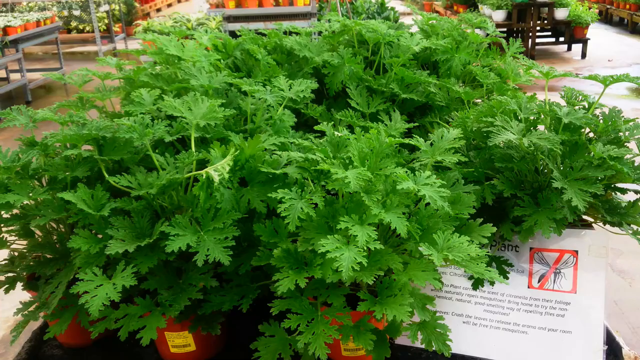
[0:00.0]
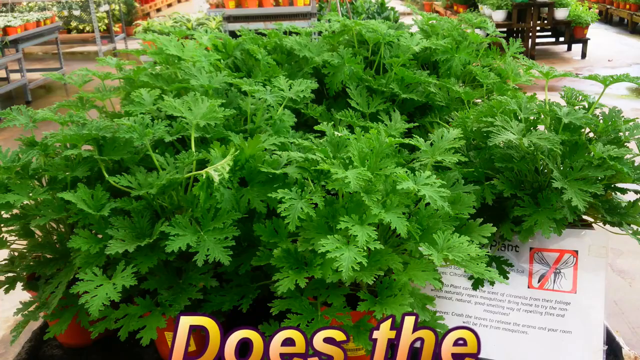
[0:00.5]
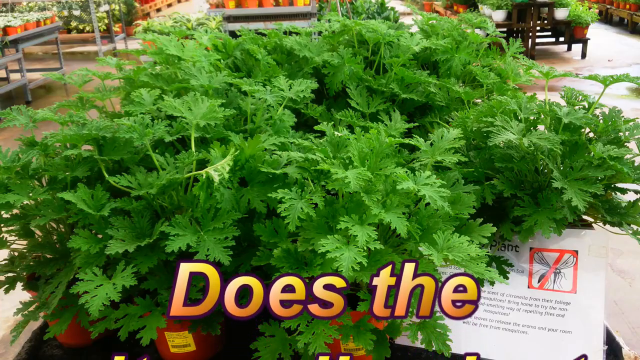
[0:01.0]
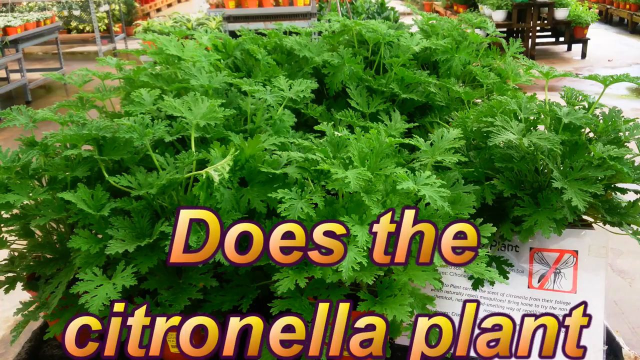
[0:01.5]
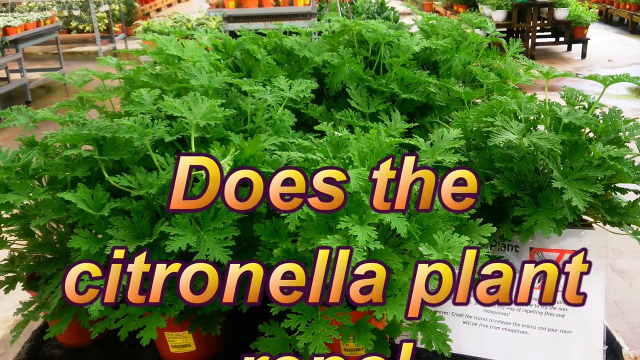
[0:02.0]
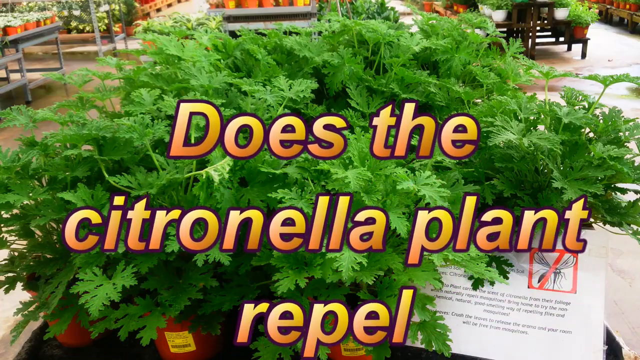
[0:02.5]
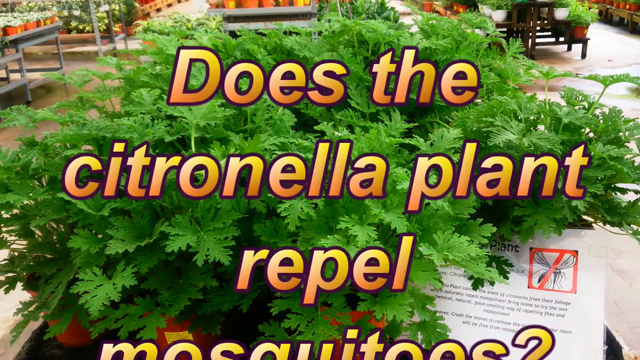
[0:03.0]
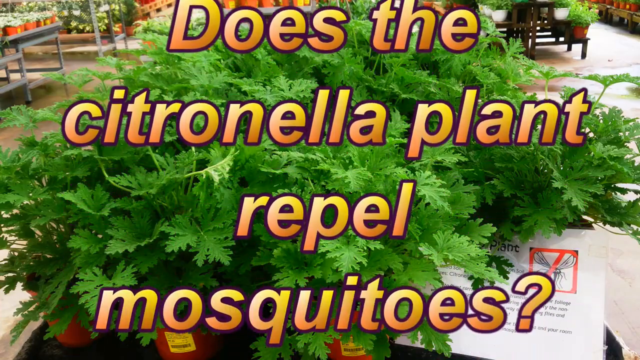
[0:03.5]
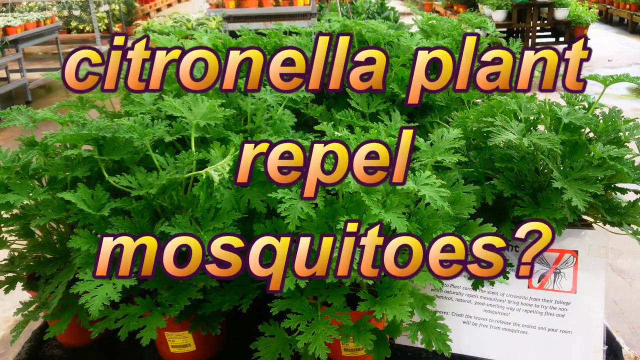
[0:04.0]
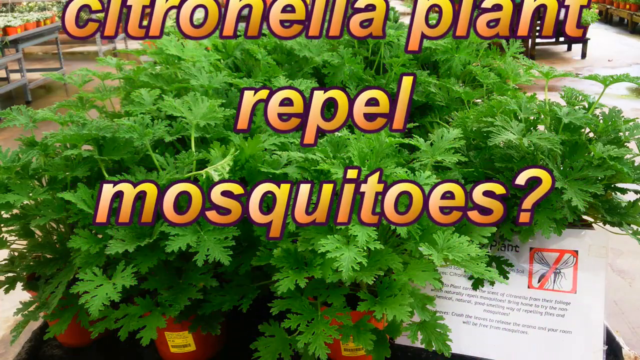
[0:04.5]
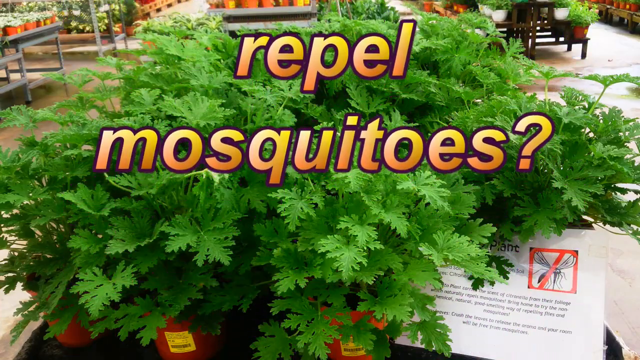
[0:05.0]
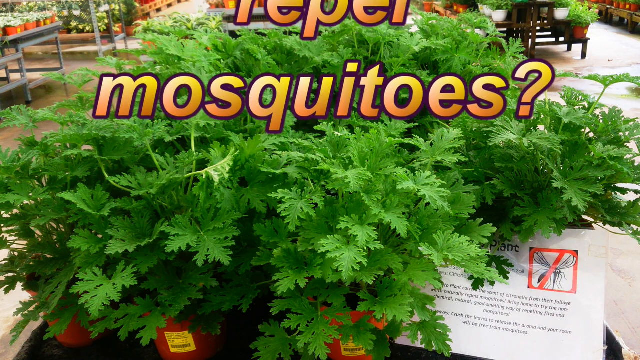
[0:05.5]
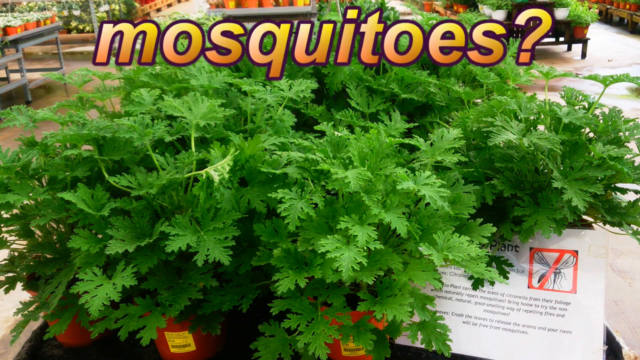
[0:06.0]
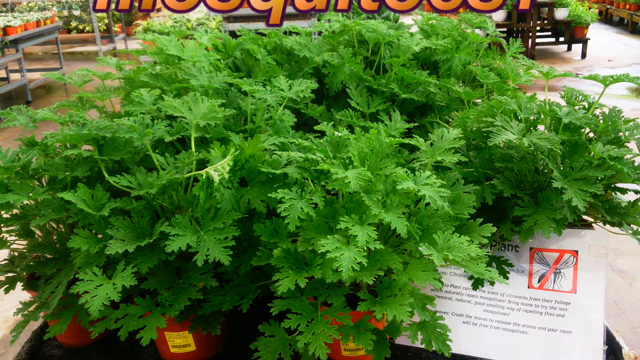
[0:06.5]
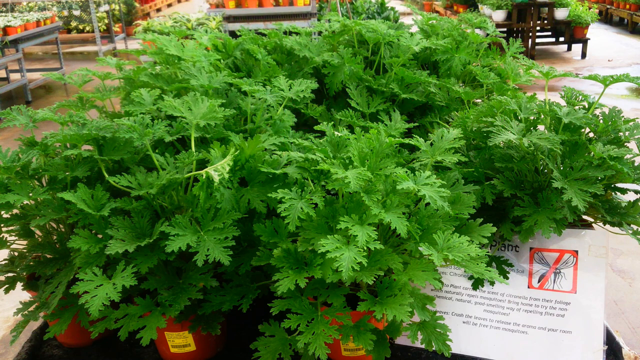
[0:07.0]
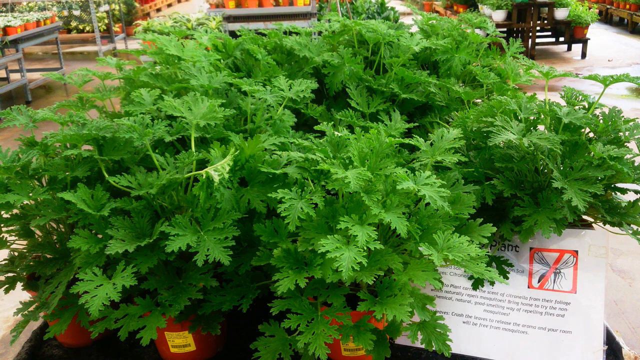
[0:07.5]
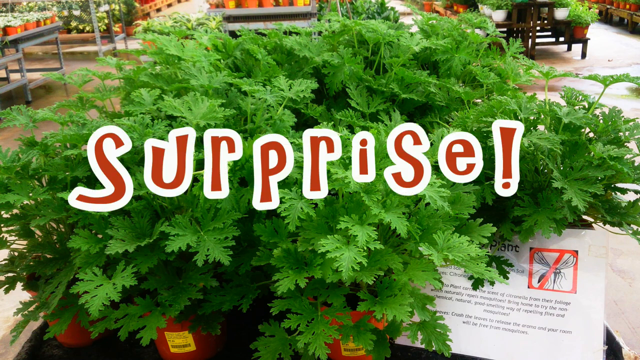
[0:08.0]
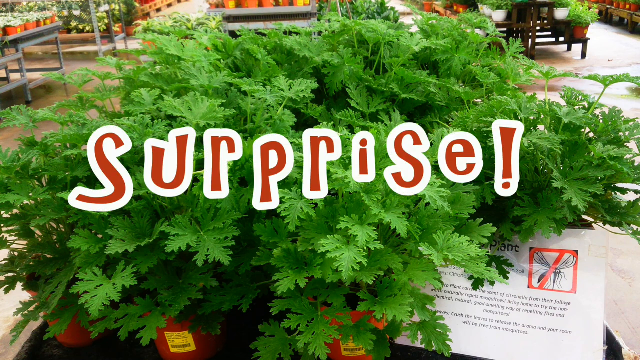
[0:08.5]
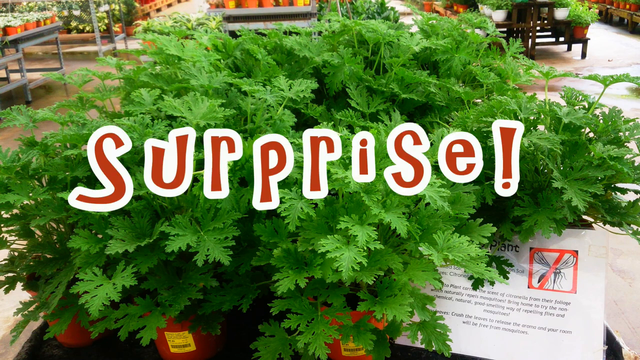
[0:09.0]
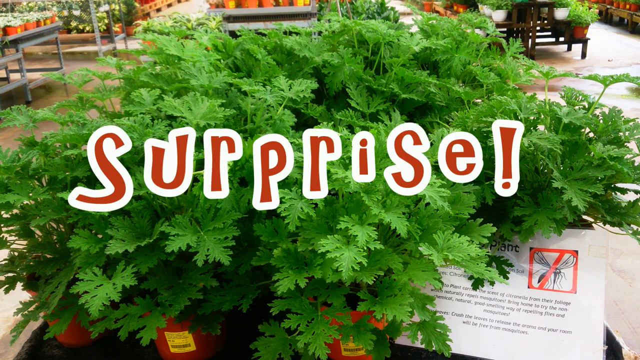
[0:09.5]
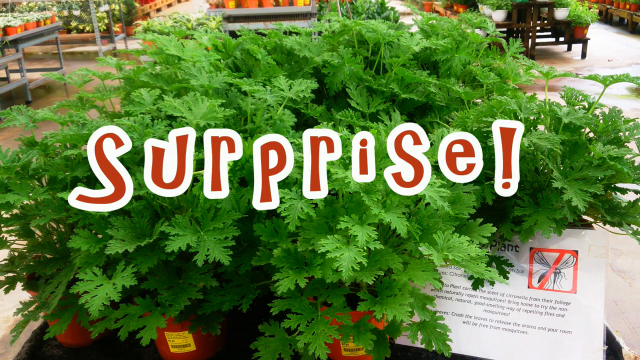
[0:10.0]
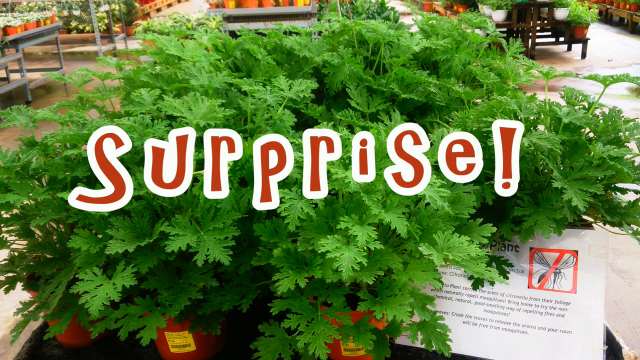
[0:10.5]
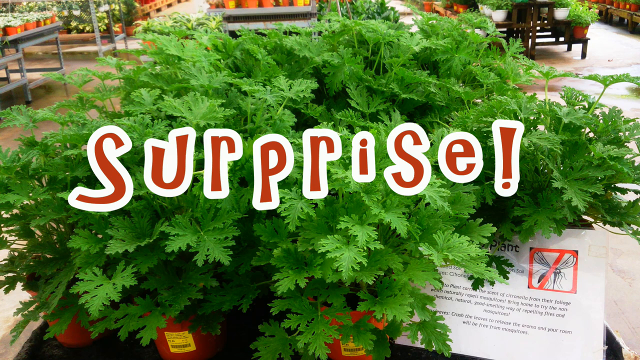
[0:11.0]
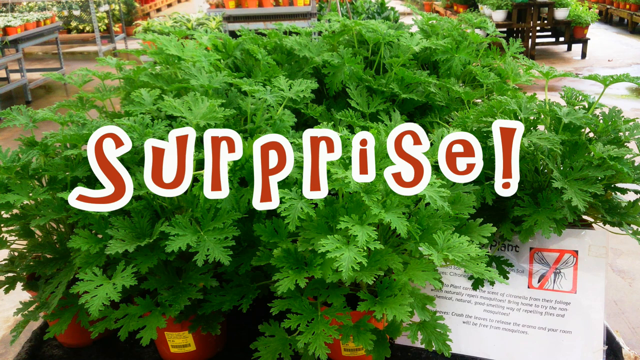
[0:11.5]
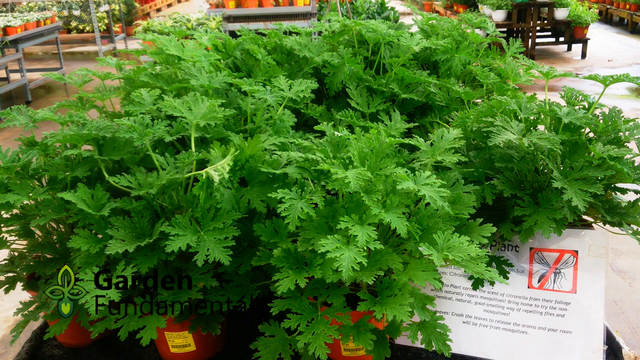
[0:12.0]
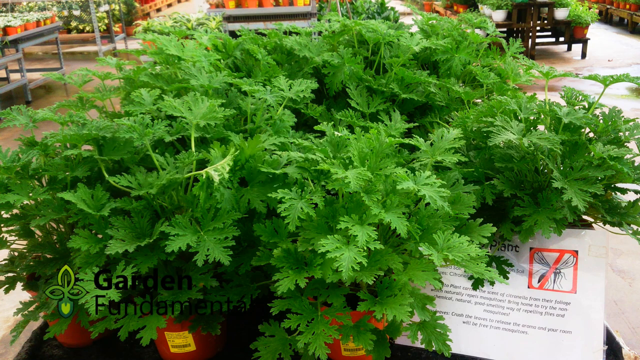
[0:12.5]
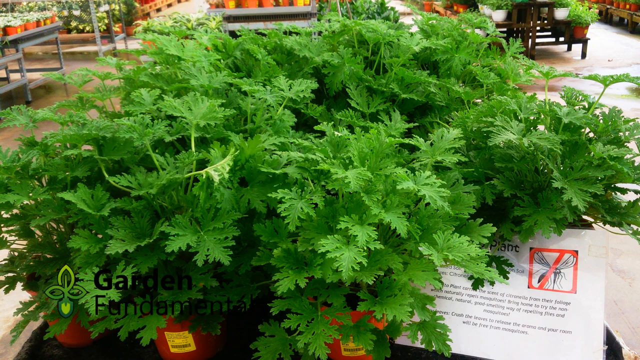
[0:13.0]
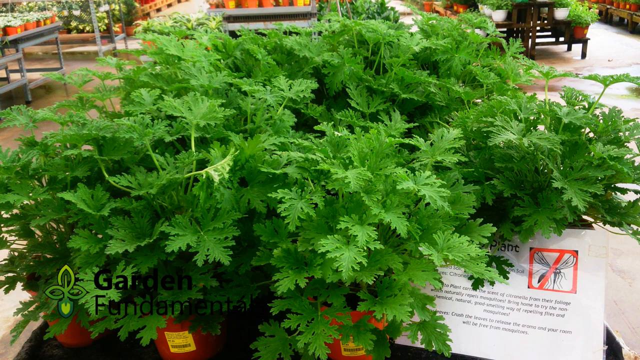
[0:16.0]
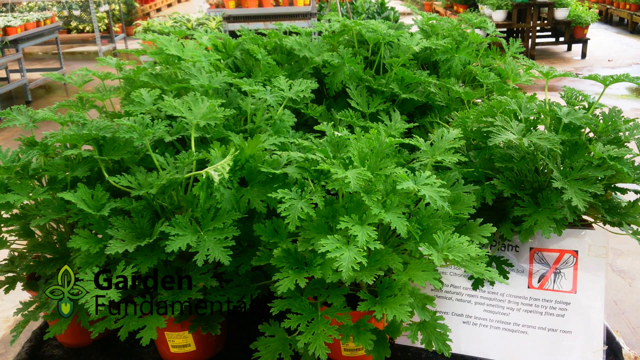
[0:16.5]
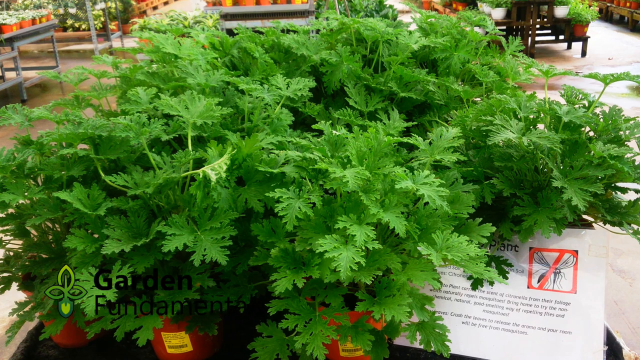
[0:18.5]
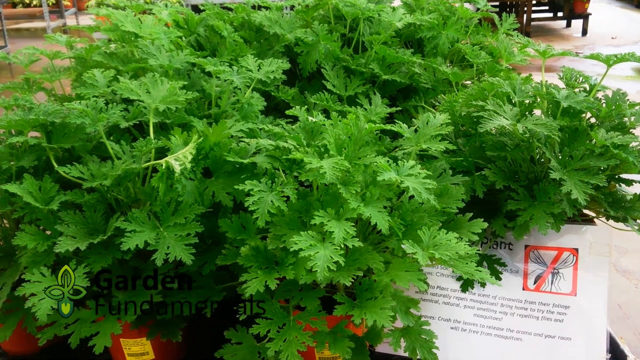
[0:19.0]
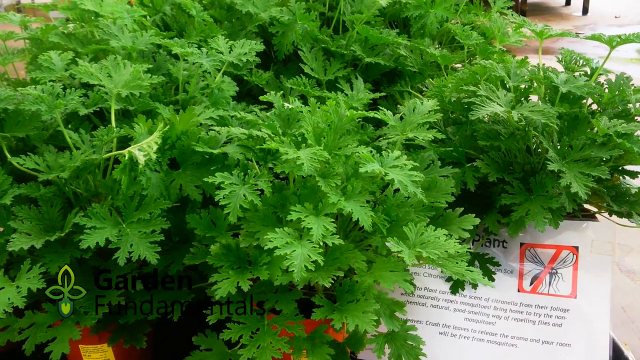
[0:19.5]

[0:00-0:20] A bunch of a very bushy plant appears to be in the garden center of a store, and there looks to be a no-mosquito sign. Orange text scrolls up onto the screen from the bottom, reading "does the citronella plant repel mosquitoes?" The picture of the citronella then stays on screen as words fade in, in red with a white outline. The view returns to the citronella plant sitting in the store, in different pots. The camera zooms into a paper that appears to be sitting on the right-hand side below the citronella plant. Only the word "plant", some text, and a little cartoon mosquito crossed out with a red X square can be made out on it.